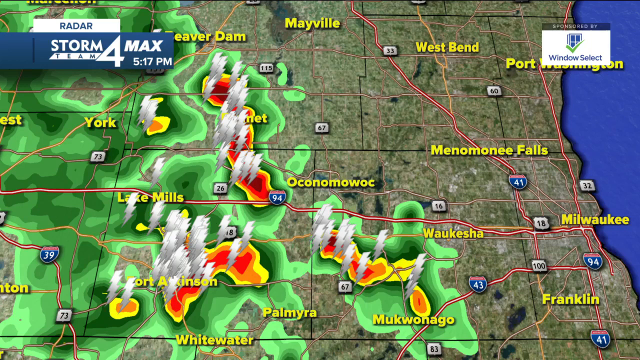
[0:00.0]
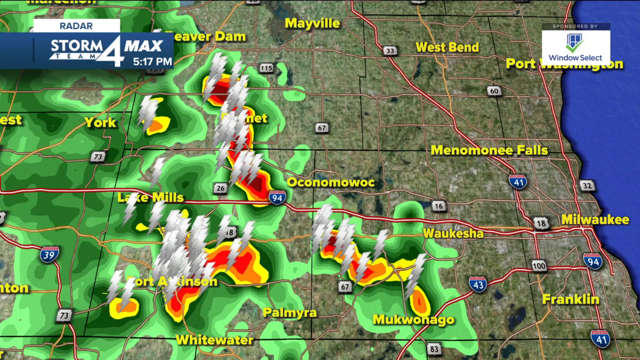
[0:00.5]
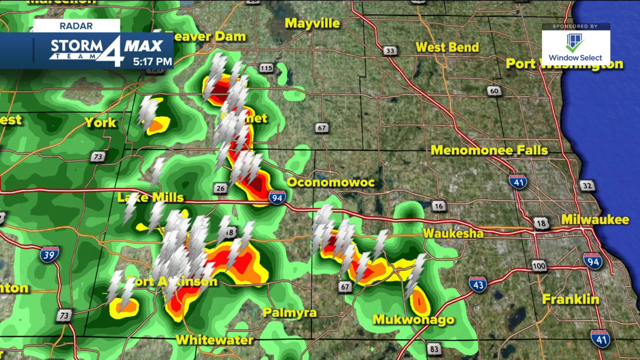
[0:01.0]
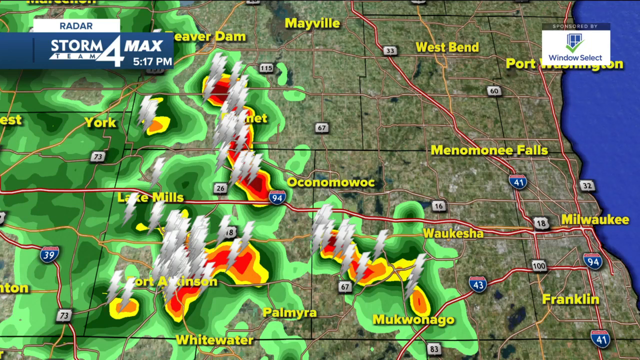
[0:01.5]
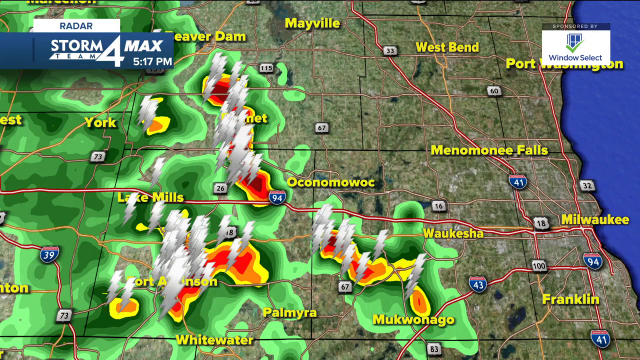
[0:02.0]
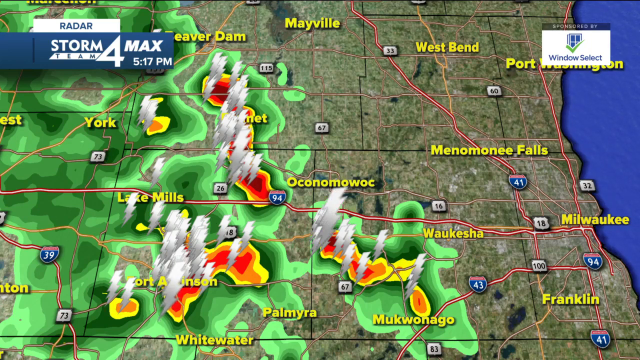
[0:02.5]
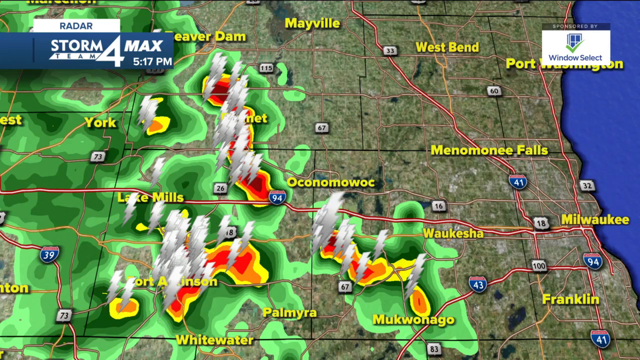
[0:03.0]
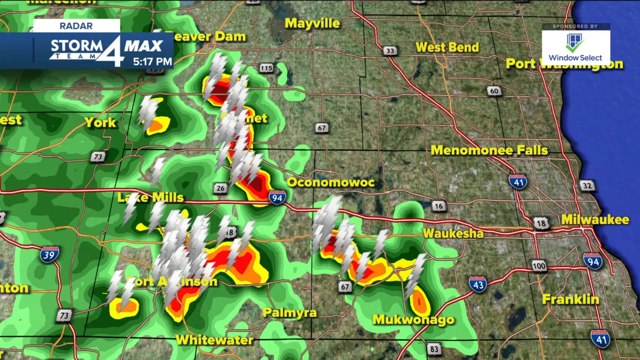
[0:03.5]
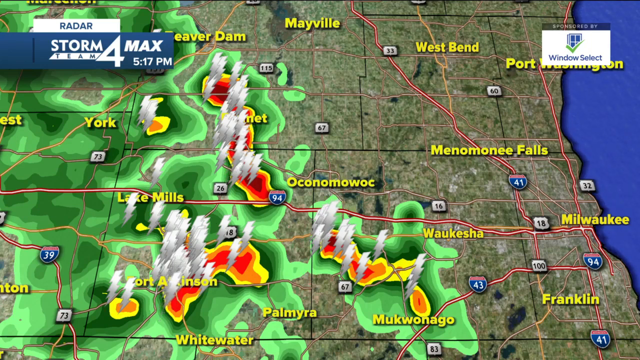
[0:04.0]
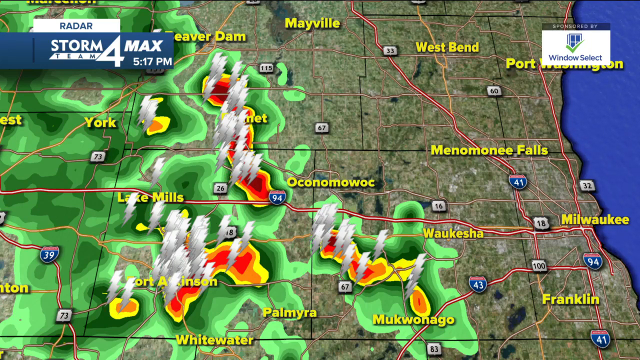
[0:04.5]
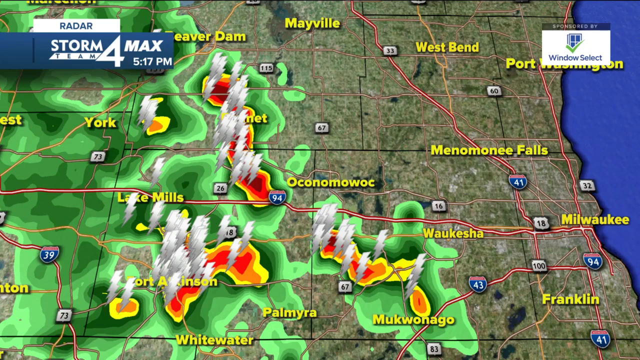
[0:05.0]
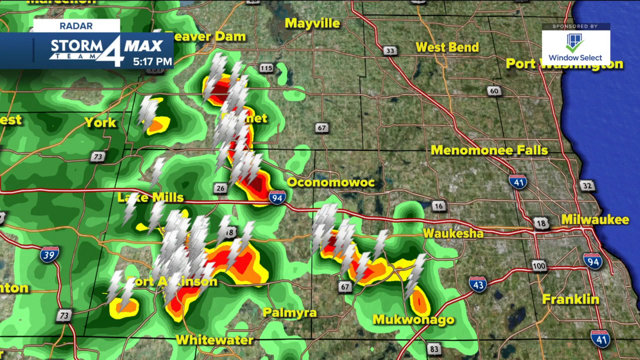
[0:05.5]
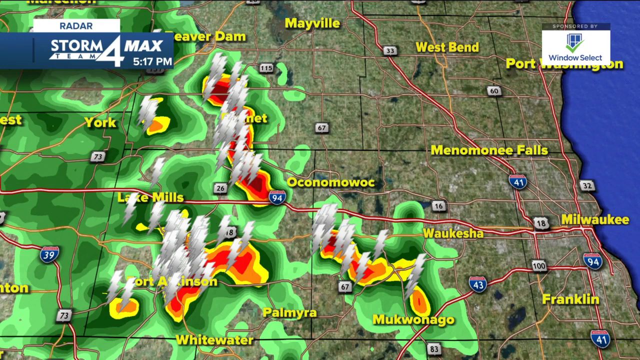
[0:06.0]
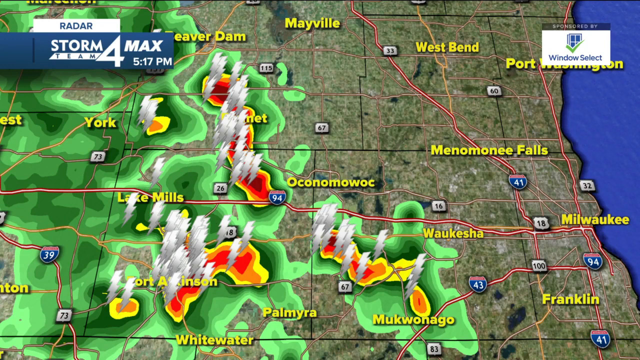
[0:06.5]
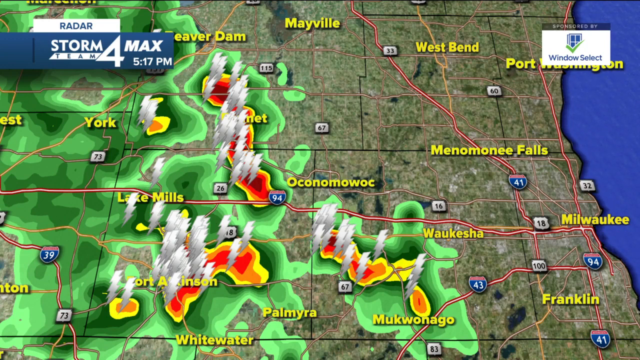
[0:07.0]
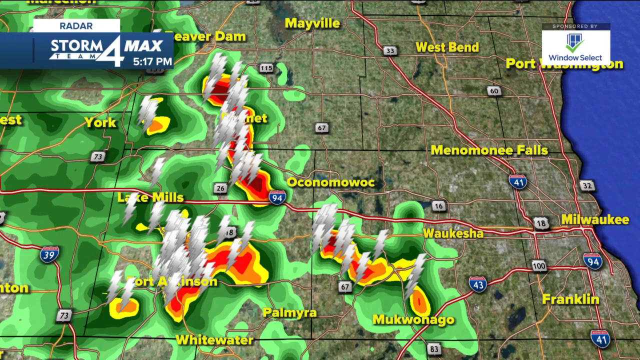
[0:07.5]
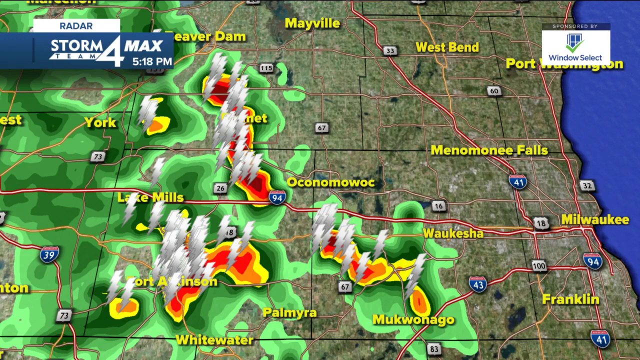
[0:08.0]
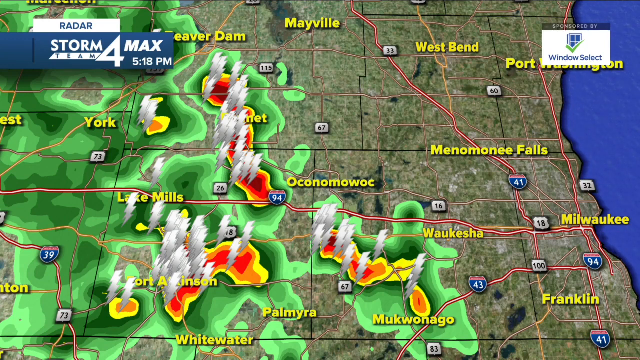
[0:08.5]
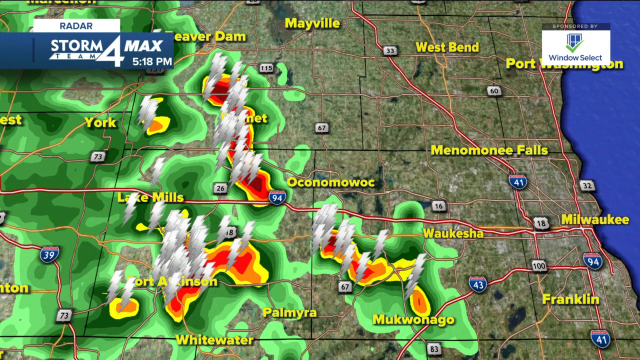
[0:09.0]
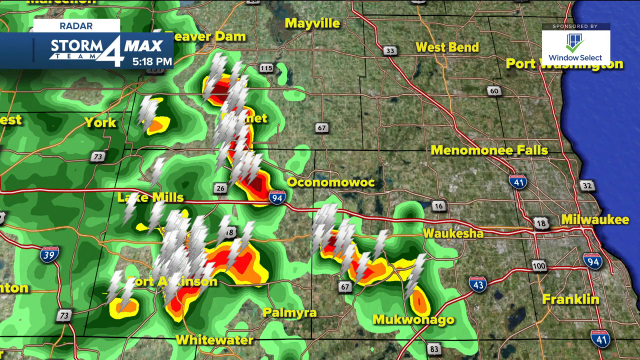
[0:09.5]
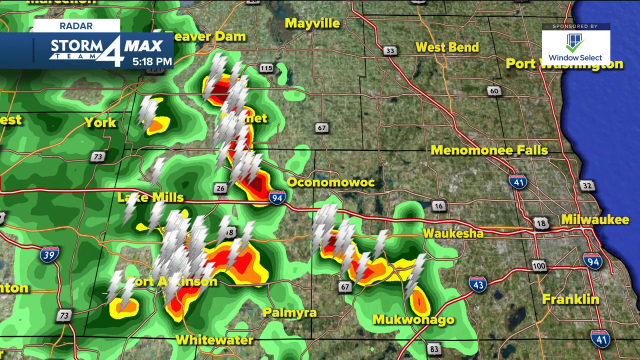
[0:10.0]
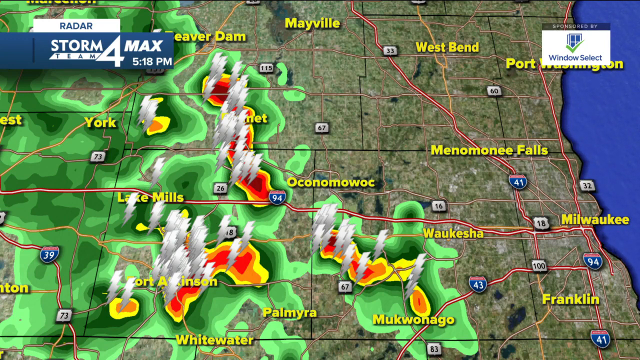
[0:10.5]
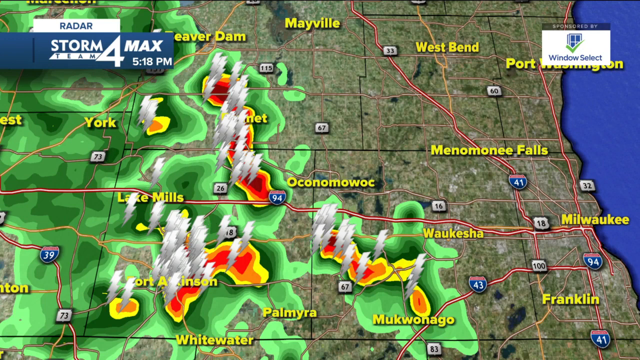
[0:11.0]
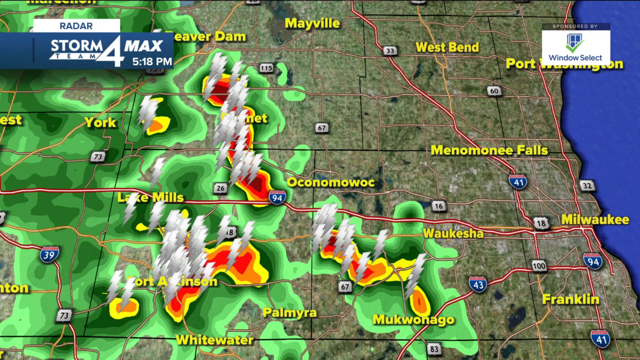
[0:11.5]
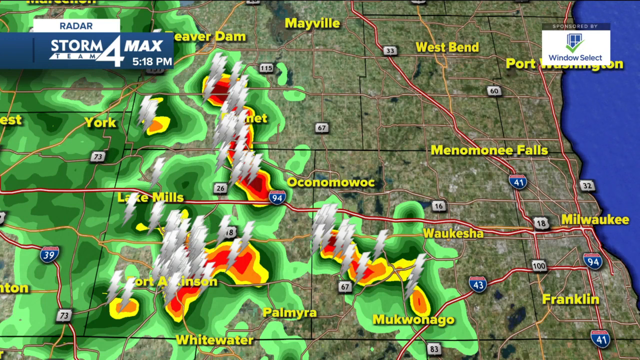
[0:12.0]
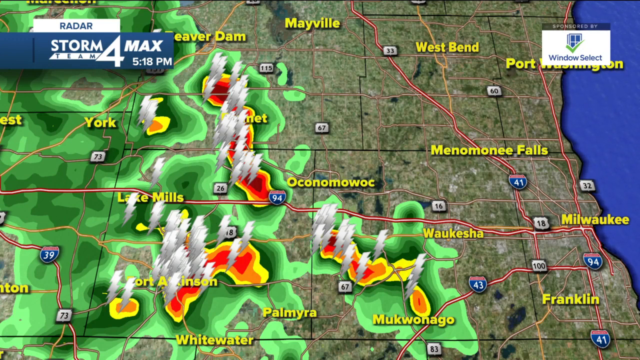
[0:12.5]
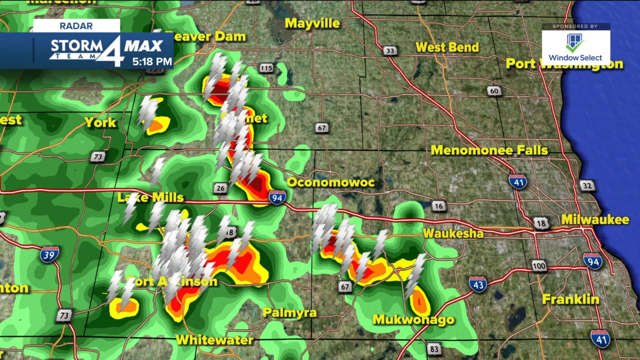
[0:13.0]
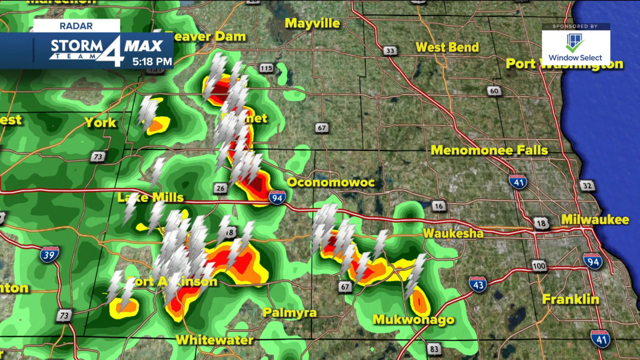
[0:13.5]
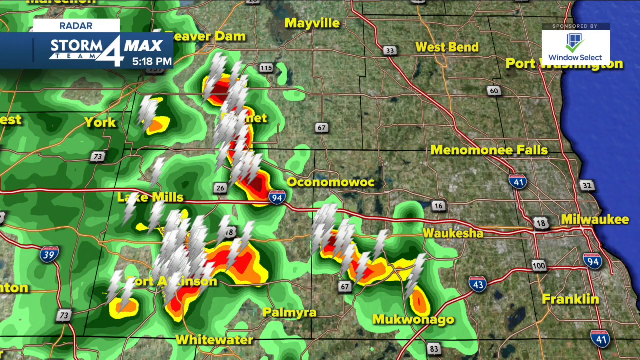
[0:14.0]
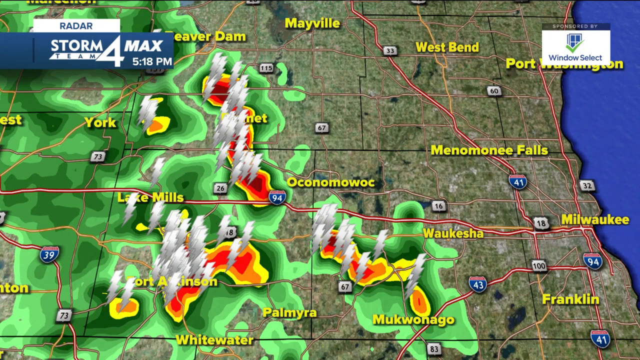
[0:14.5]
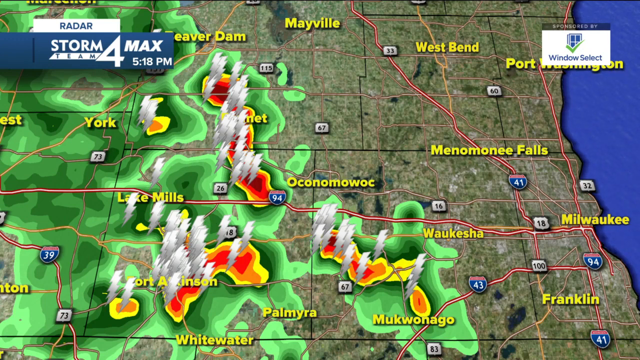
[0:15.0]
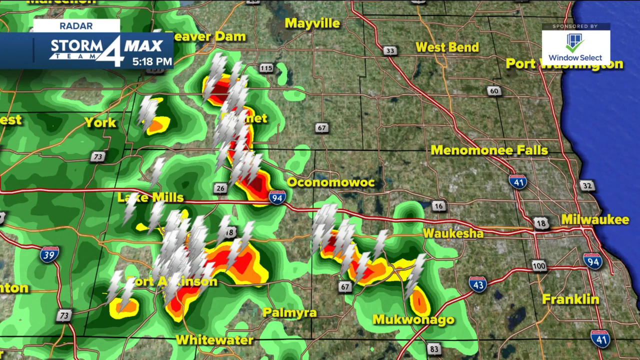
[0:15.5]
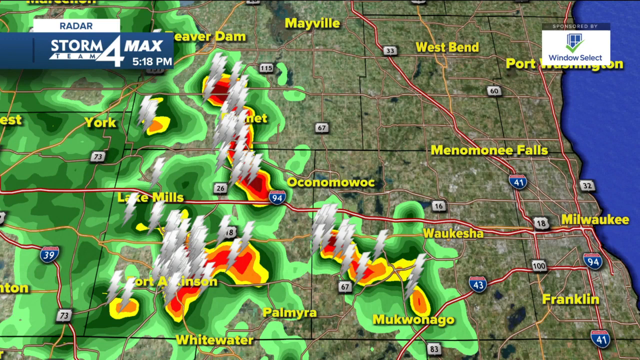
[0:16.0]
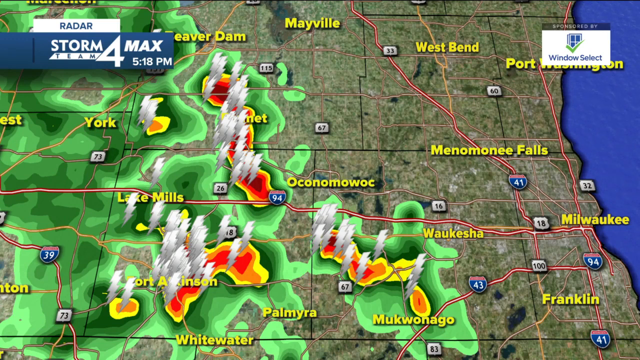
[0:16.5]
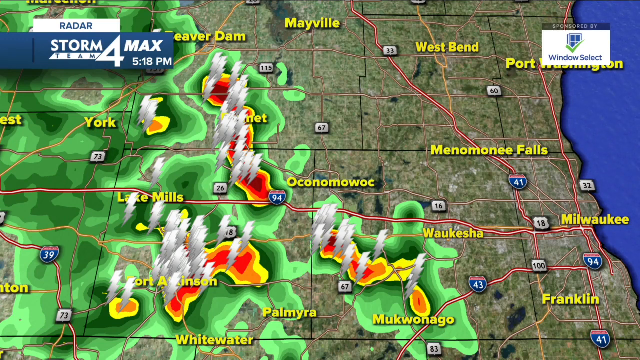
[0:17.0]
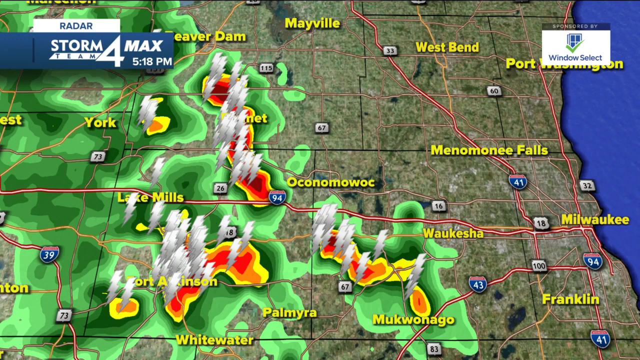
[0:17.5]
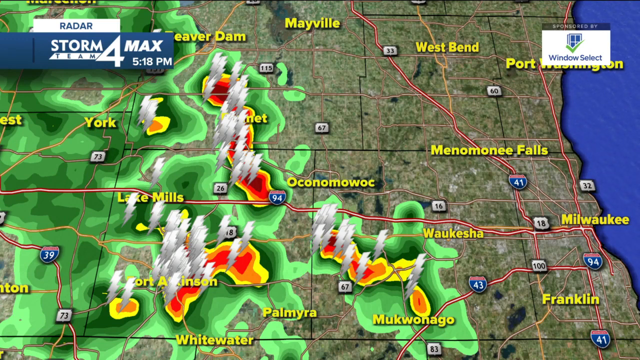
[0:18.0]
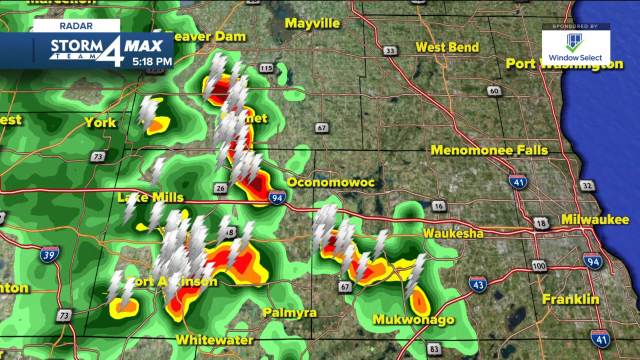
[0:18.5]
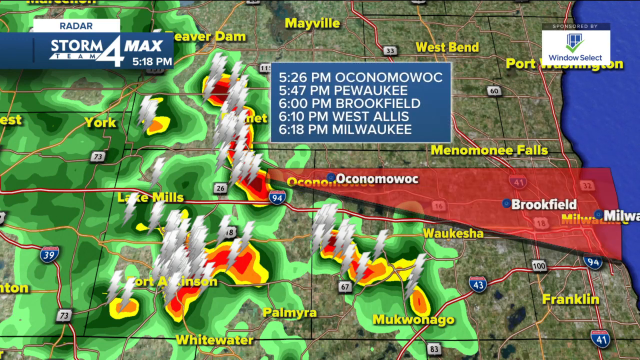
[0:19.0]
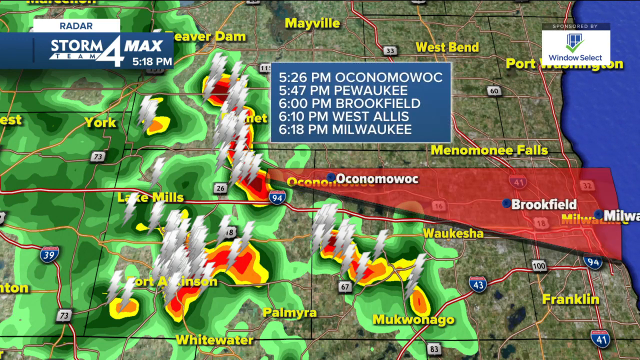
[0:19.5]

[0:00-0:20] The video opens with a blue border with white writing. At the top is text written in blue on a white background, and below it is dark blue writing that includes "5.17 PM". A weather forecast image appears colored like an oil painting: what seems to be green covers the parts on the left-hand side, fiery colorings cover the middle, and at the right-hand edge there is blue, which could indicate water. Different environments are shown within the image. Flames seem to be coming continuously out of the areas covered by the fiery colors, and they continue to be visible right below.